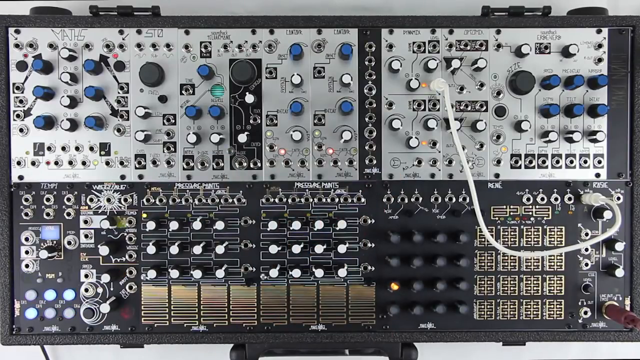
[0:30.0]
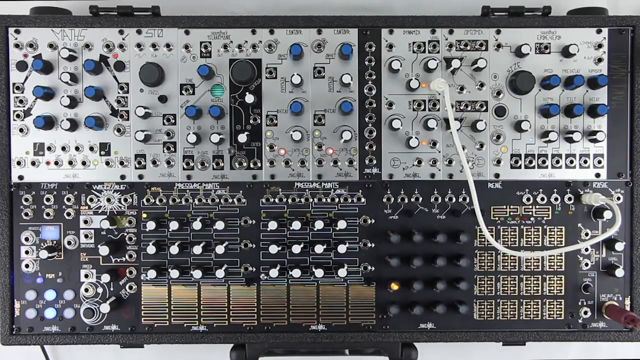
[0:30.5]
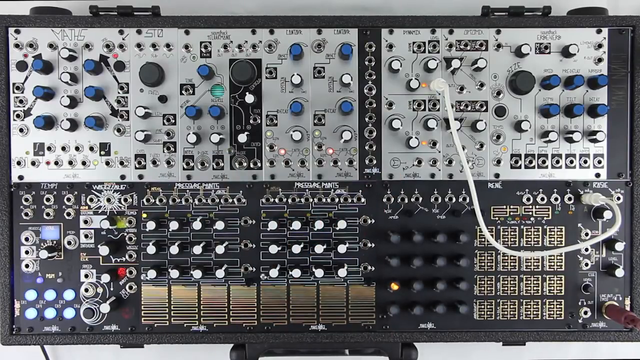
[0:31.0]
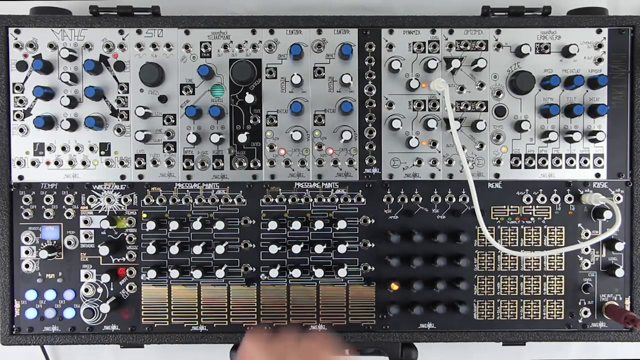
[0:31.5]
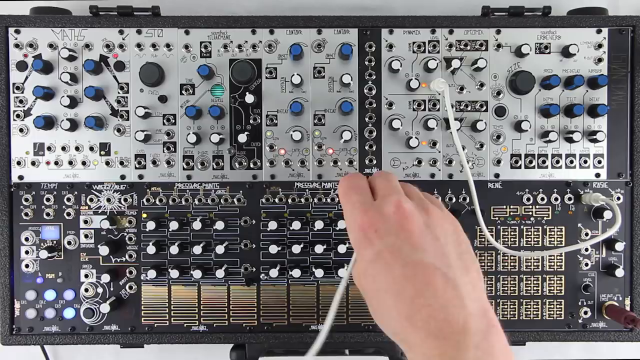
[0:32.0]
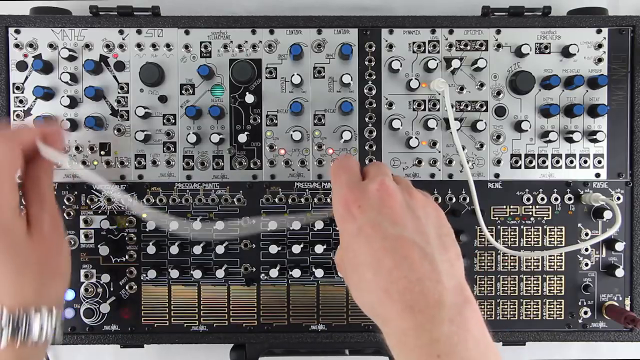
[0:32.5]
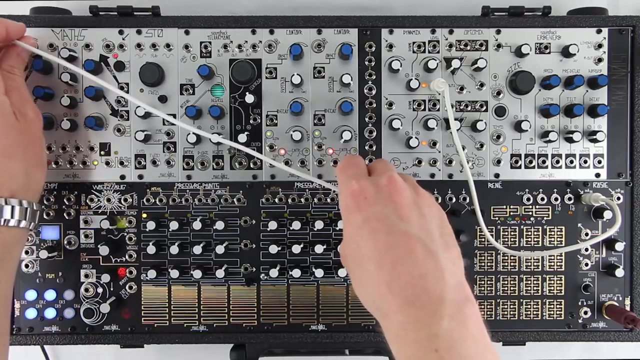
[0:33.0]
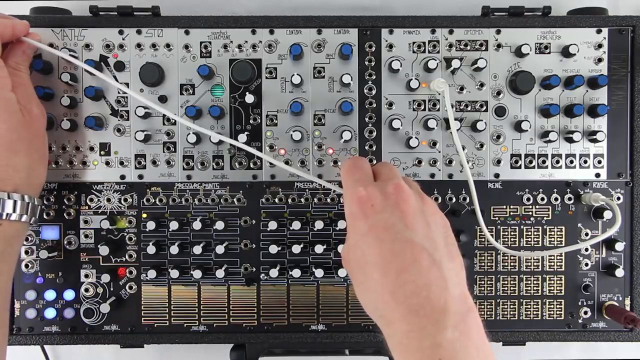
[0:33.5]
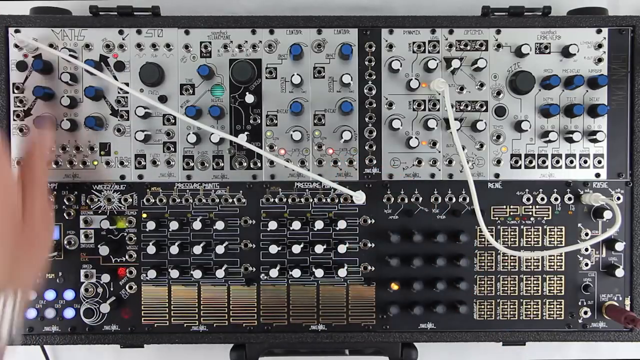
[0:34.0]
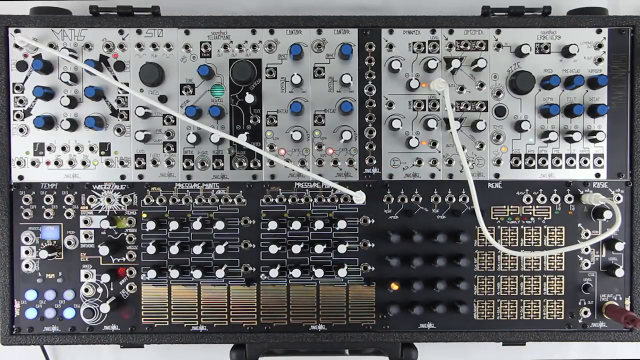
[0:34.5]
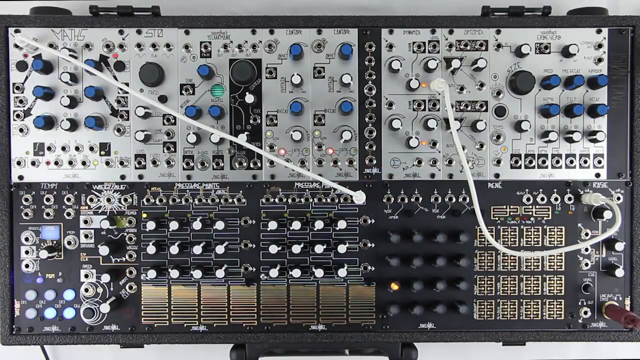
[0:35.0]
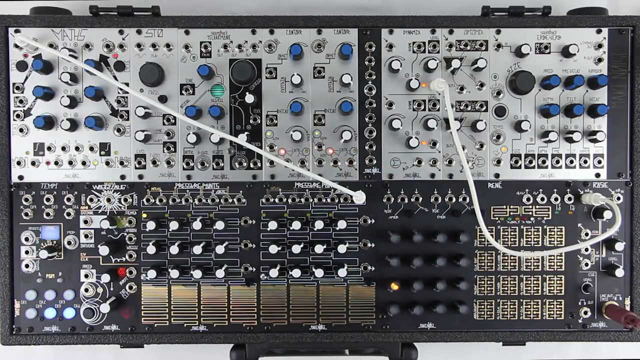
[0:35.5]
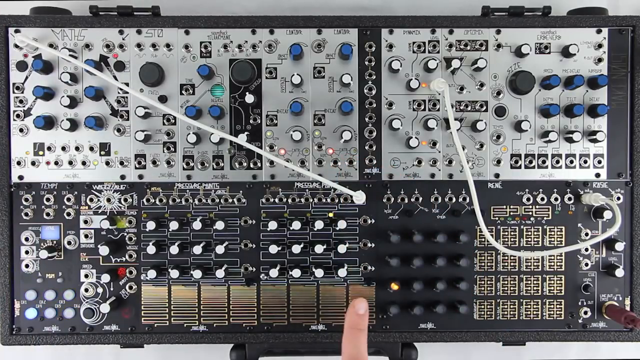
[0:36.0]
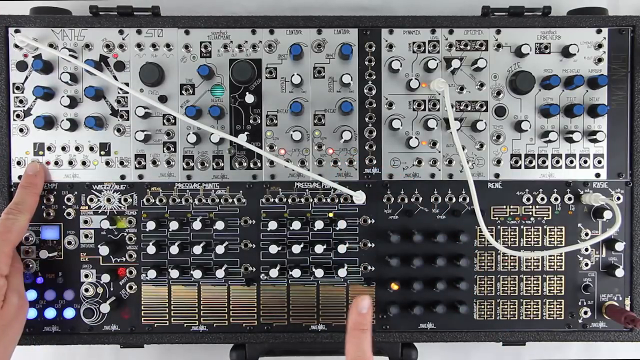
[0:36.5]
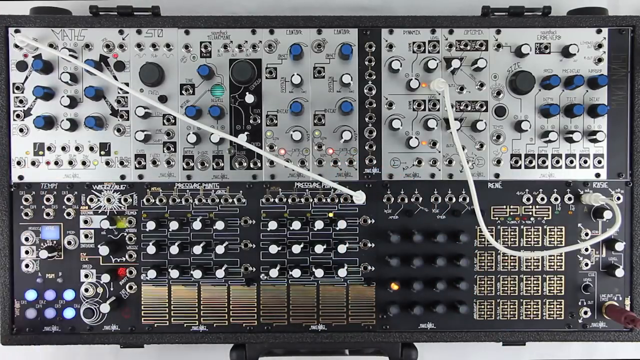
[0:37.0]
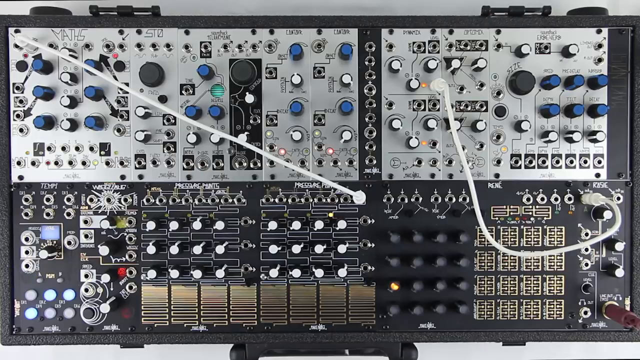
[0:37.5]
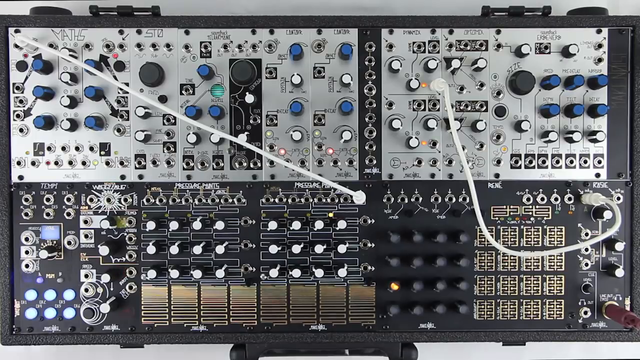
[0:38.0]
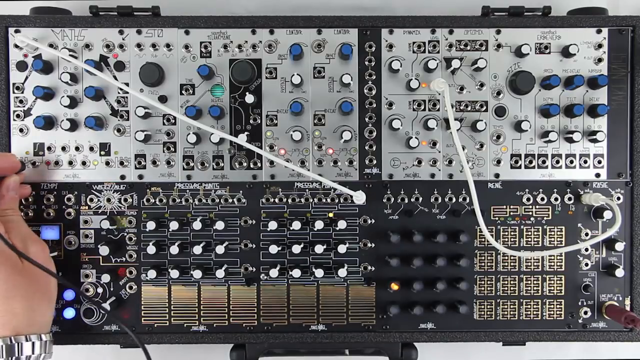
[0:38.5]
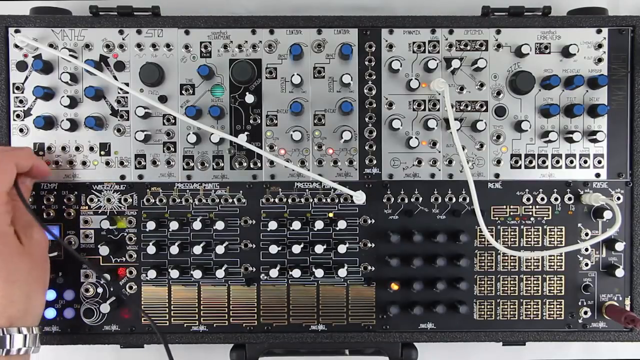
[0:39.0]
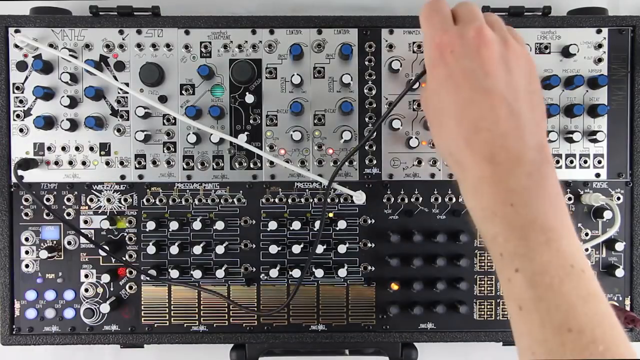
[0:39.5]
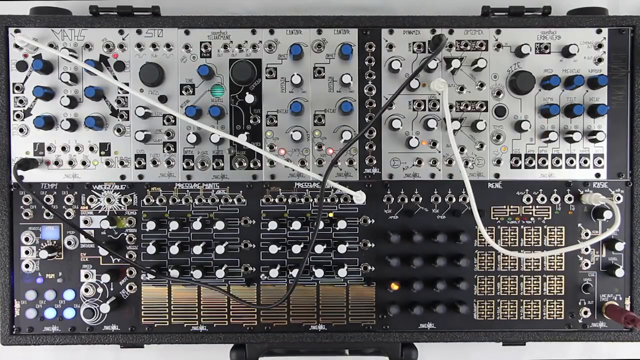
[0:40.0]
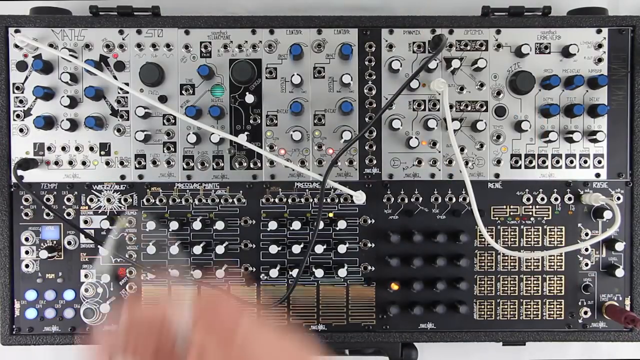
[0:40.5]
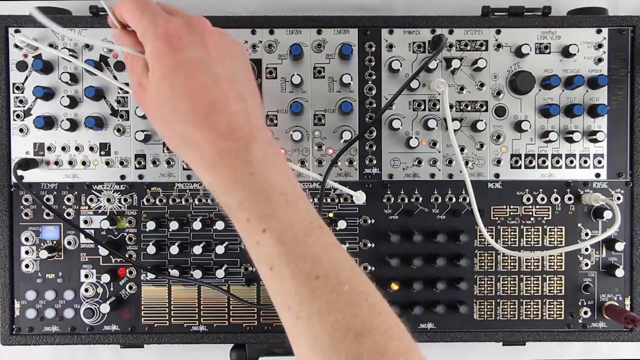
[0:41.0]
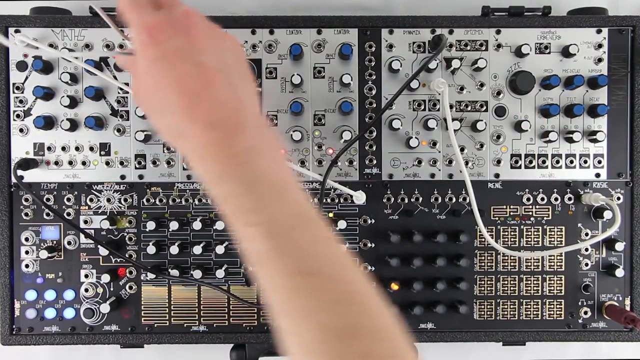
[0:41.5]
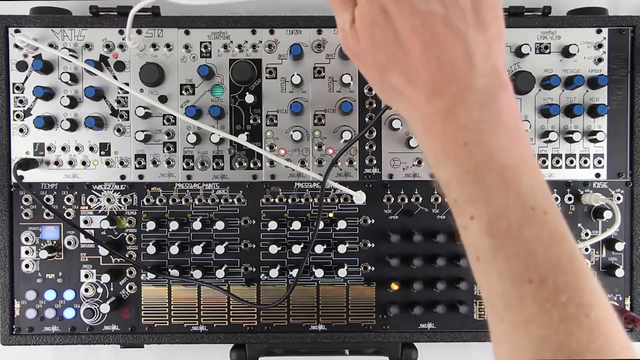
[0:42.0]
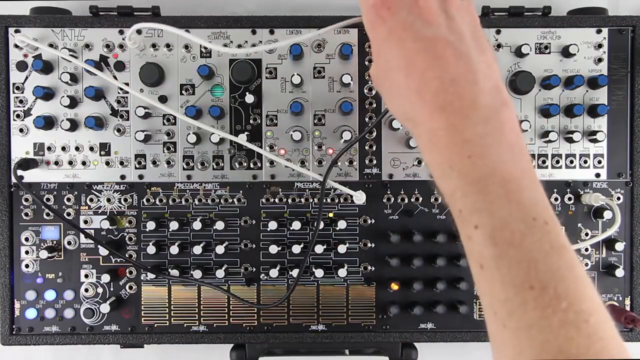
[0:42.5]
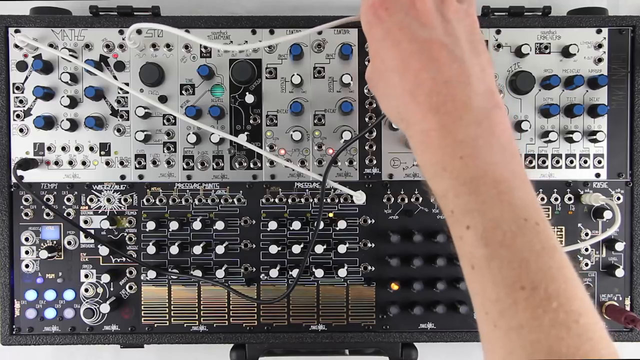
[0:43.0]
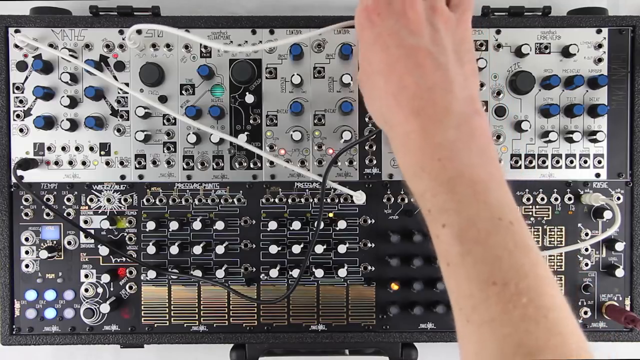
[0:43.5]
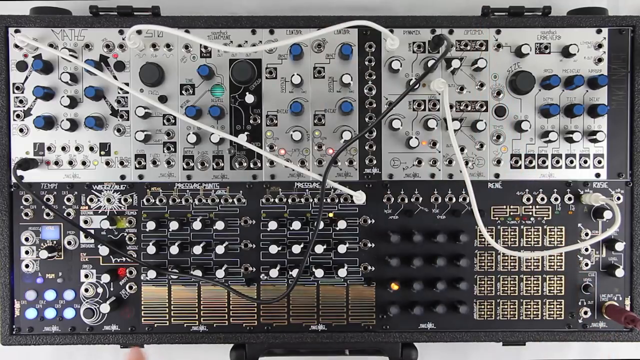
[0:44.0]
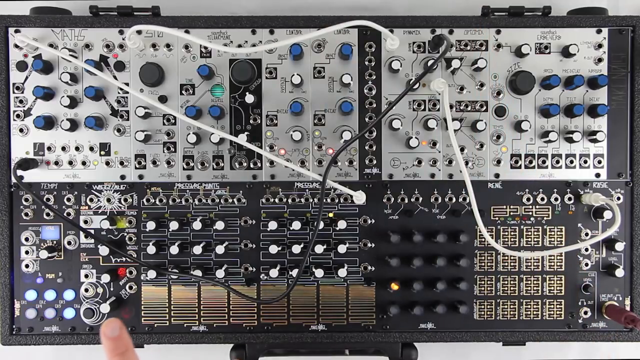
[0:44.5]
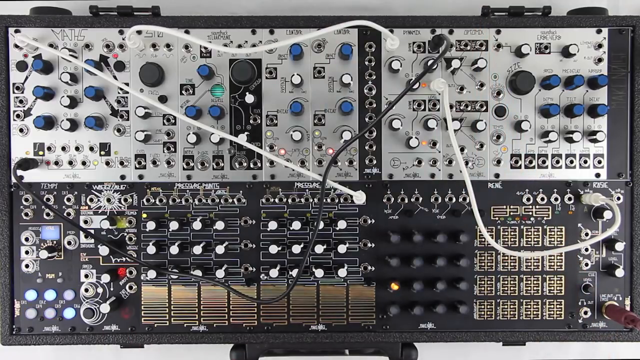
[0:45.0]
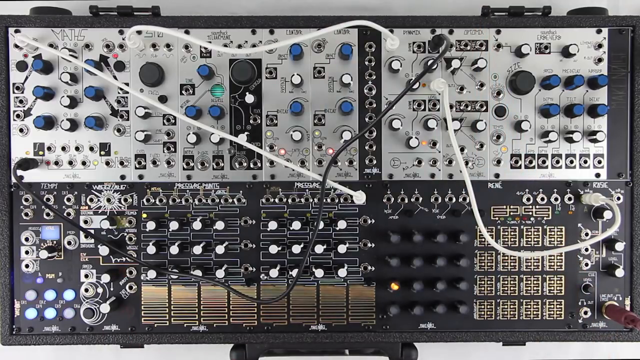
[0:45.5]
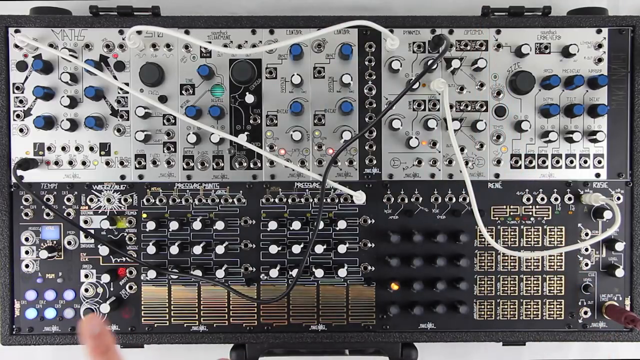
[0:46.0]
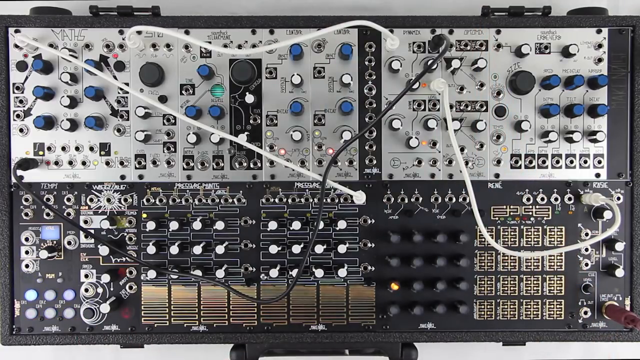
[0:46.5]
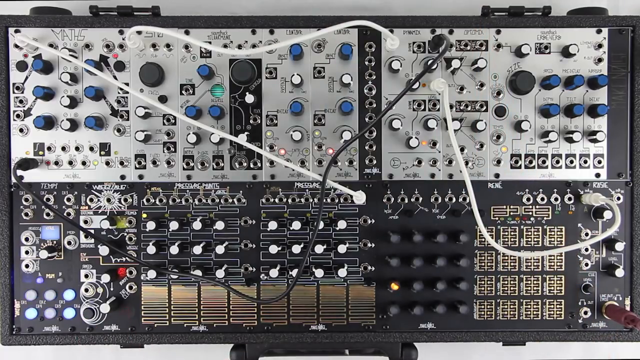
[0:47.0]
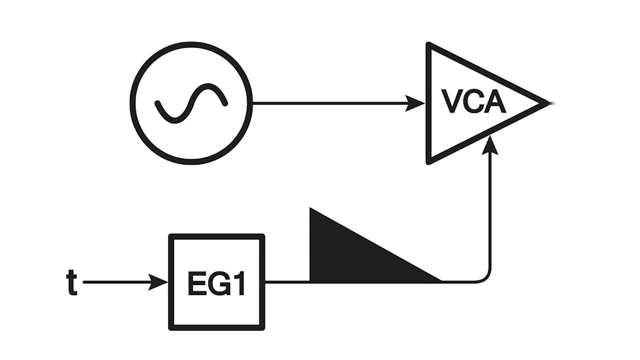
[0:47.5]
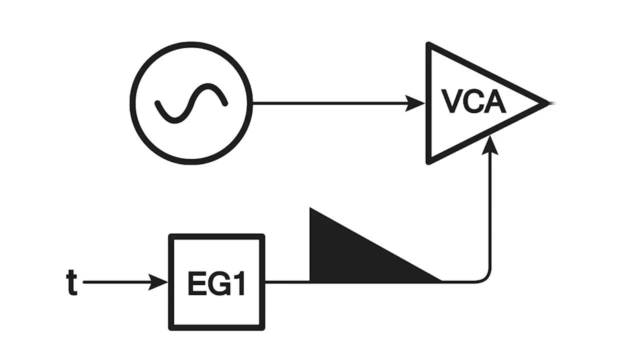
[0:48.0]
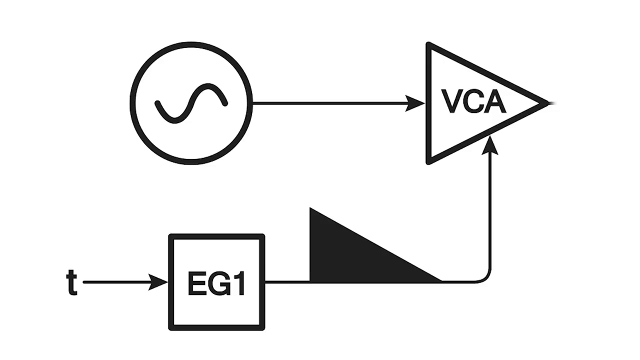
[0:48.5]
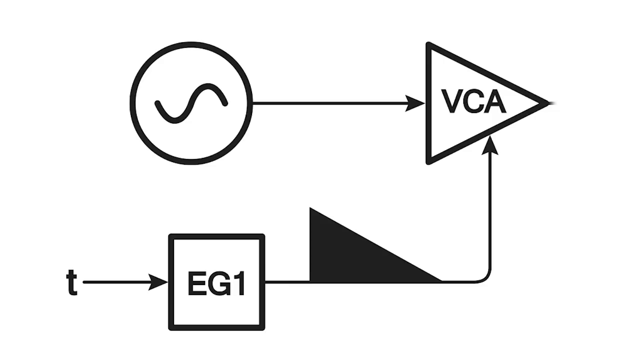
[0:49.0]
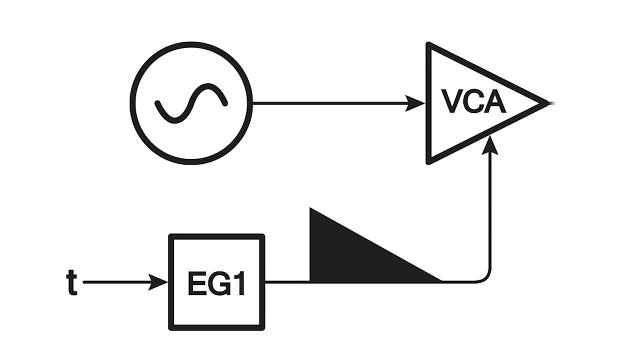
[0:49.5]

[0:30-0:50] A hand connects wires into a circuit board. He places a white wire diagonally across the top left side to match a diagram he is focusing on, and on the right side another set of two interconnecting white wire pegs goes almost diagonally across. The diagram runs from an S circle to a VGA input, to another input, and into a third and fourth input, with three different wires each having two inputs. He connects wires from one space to another three to four times, matching the diagram.